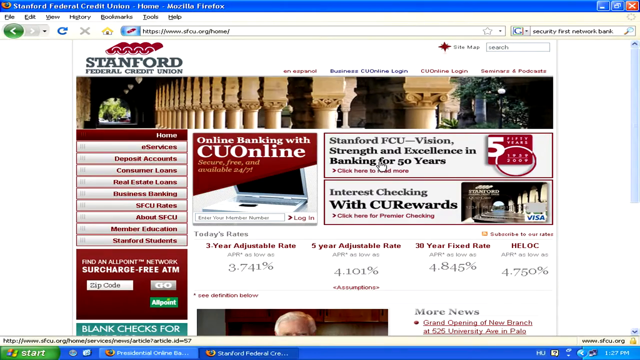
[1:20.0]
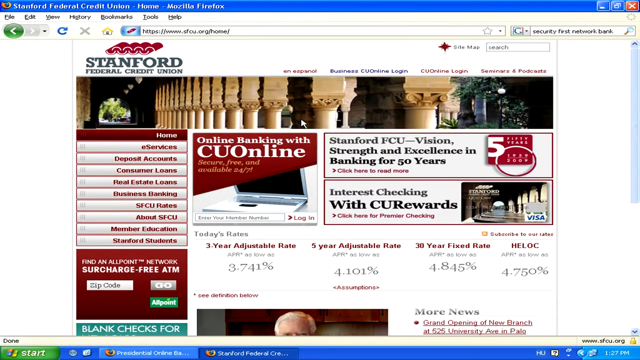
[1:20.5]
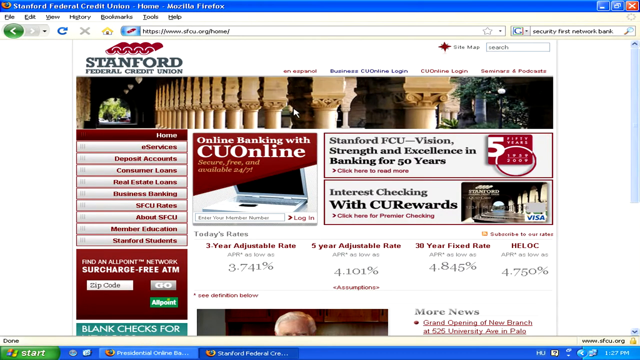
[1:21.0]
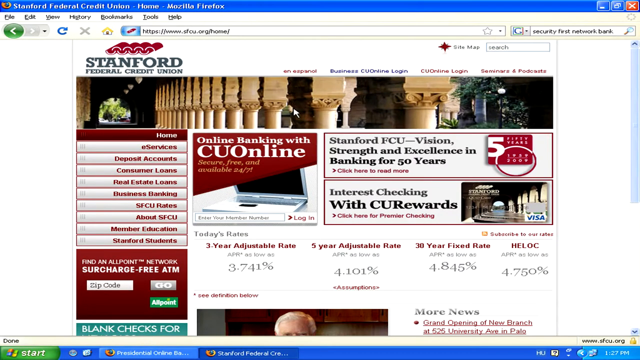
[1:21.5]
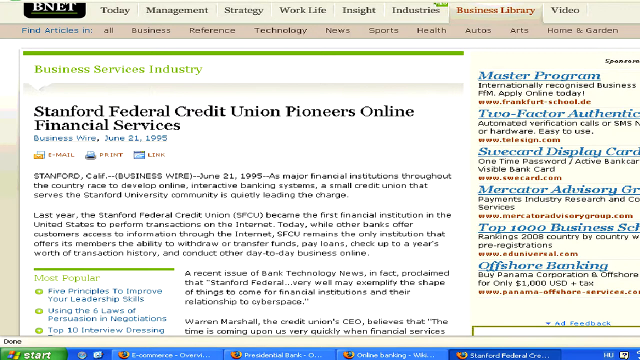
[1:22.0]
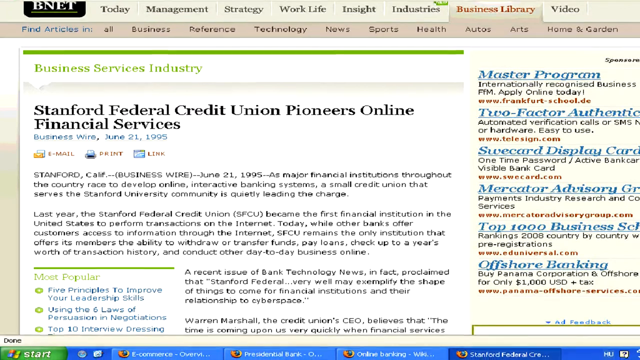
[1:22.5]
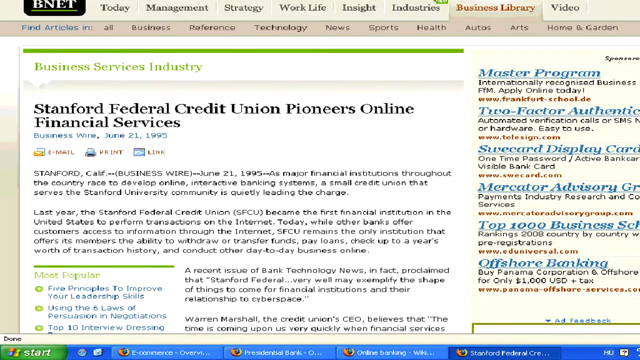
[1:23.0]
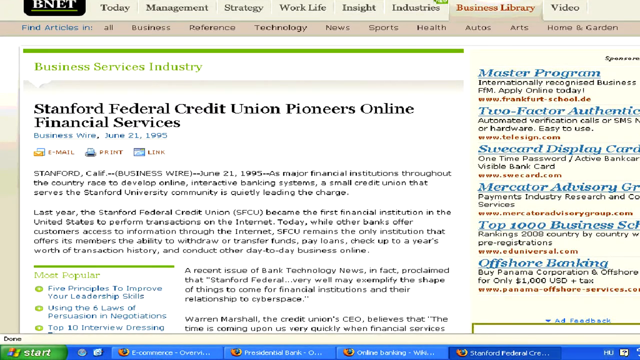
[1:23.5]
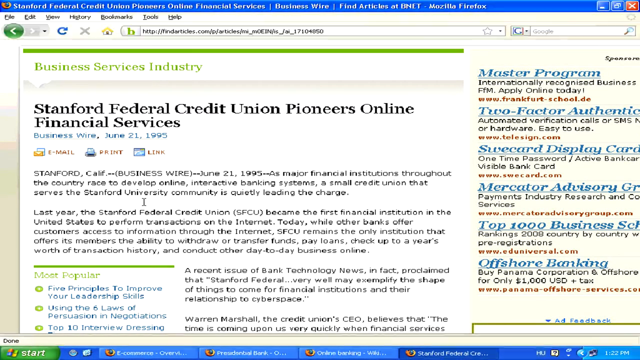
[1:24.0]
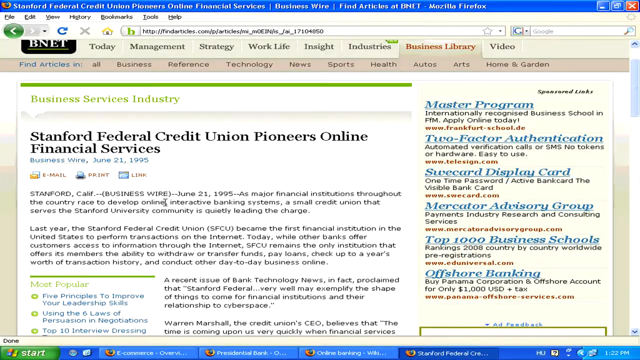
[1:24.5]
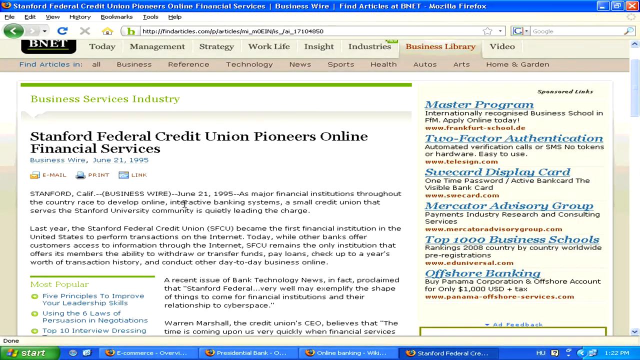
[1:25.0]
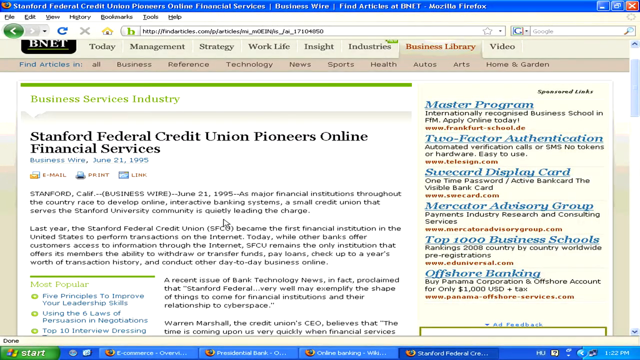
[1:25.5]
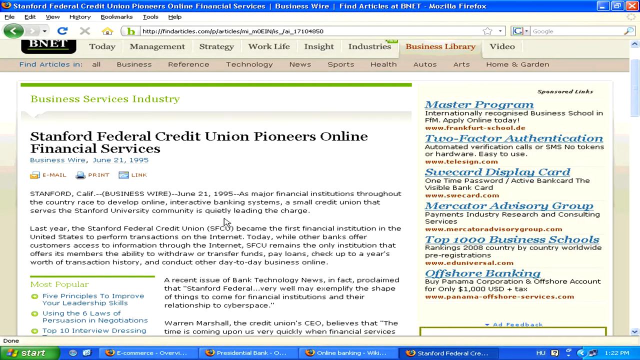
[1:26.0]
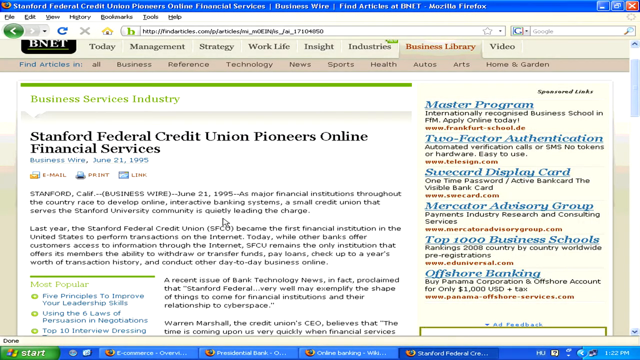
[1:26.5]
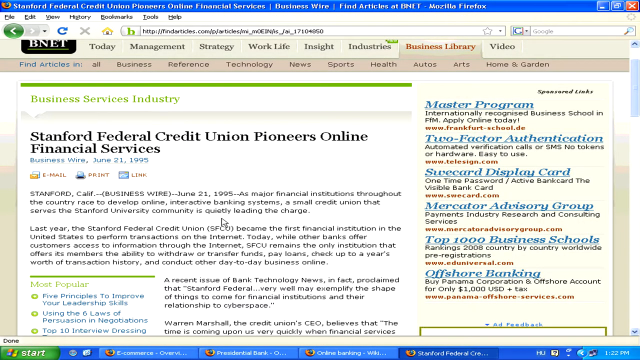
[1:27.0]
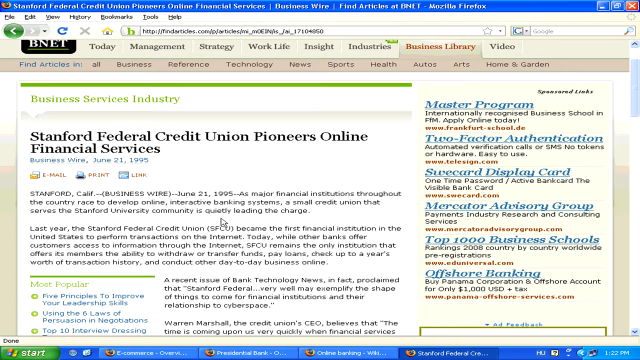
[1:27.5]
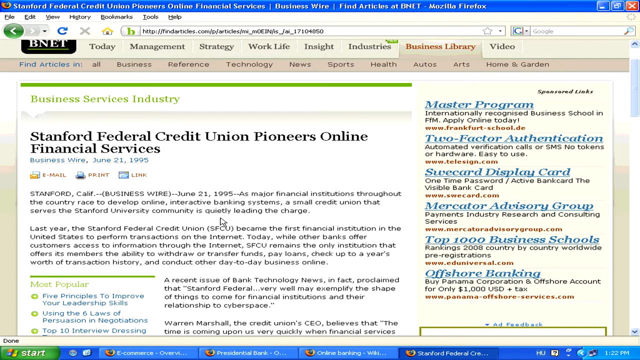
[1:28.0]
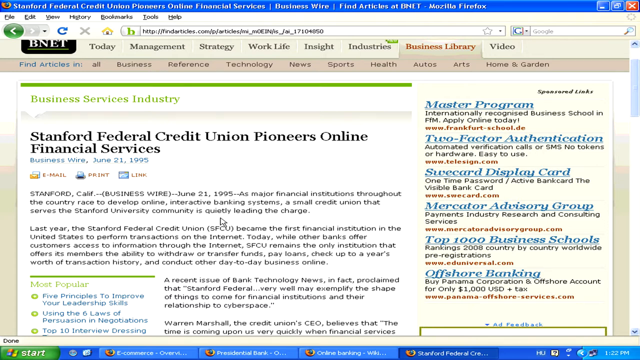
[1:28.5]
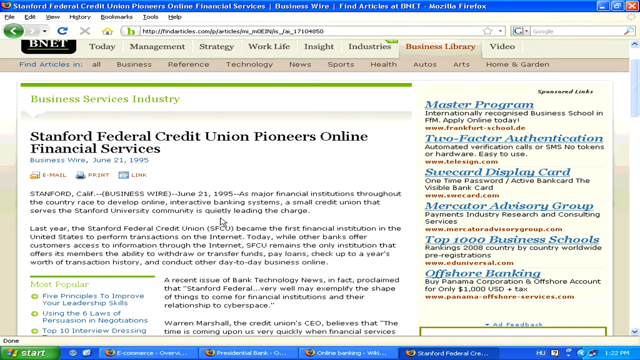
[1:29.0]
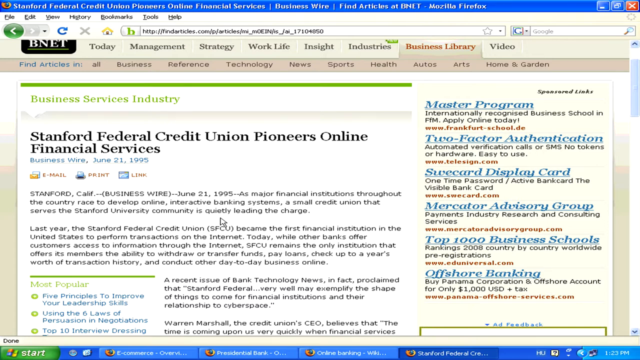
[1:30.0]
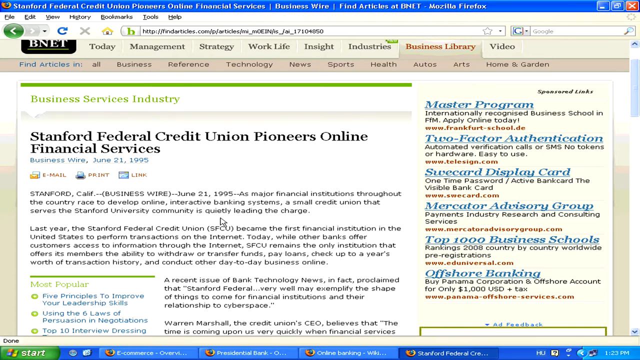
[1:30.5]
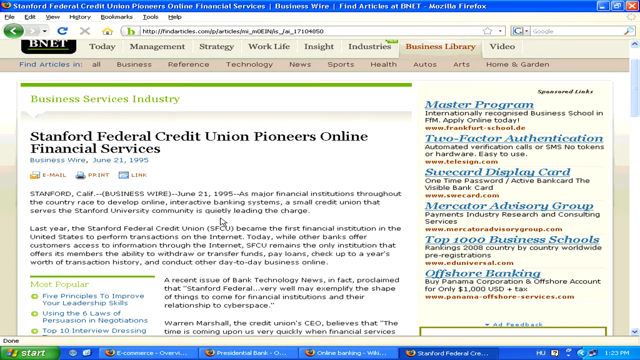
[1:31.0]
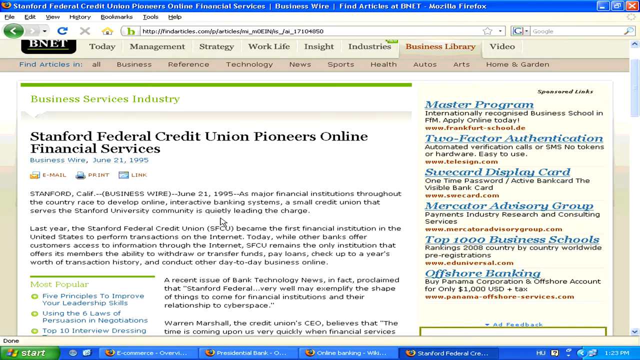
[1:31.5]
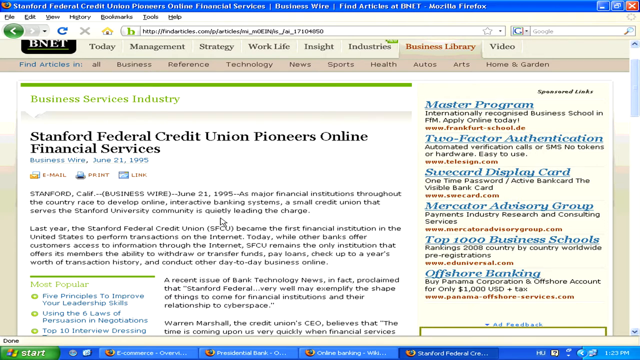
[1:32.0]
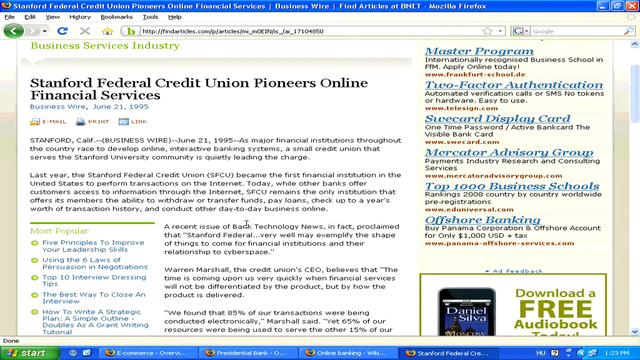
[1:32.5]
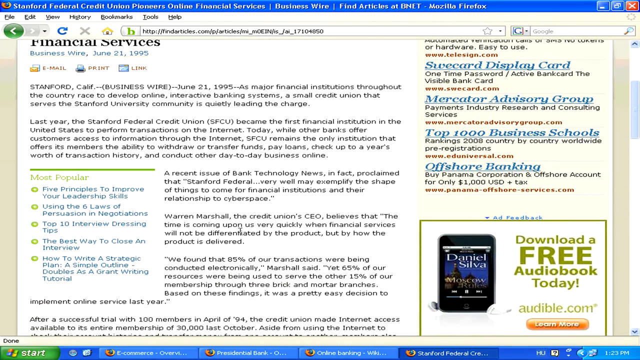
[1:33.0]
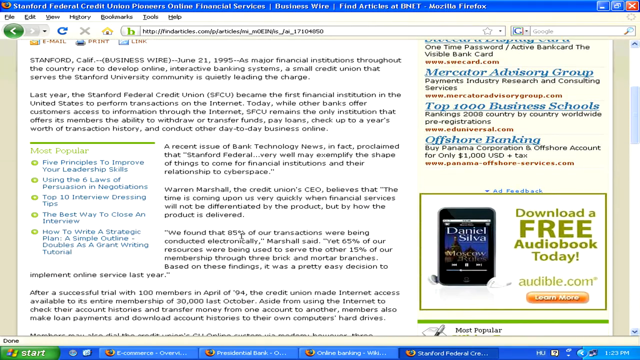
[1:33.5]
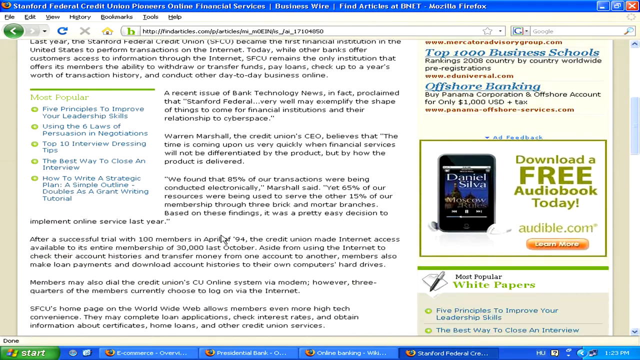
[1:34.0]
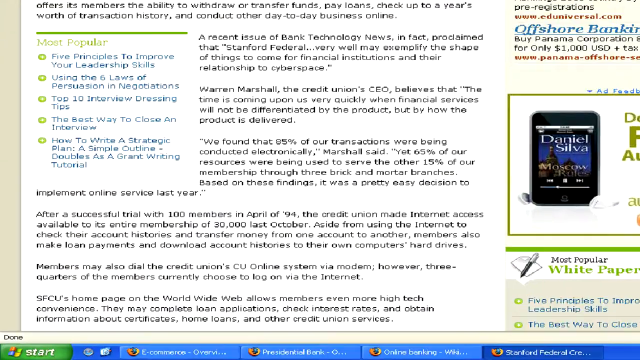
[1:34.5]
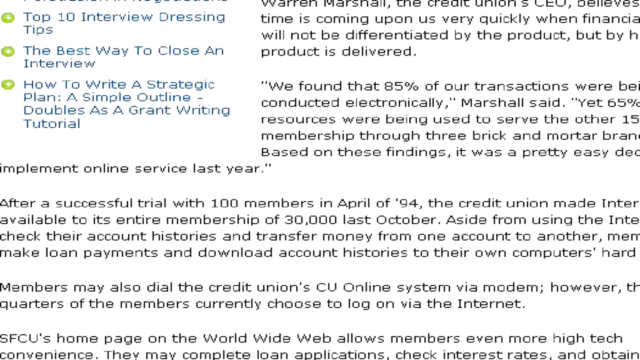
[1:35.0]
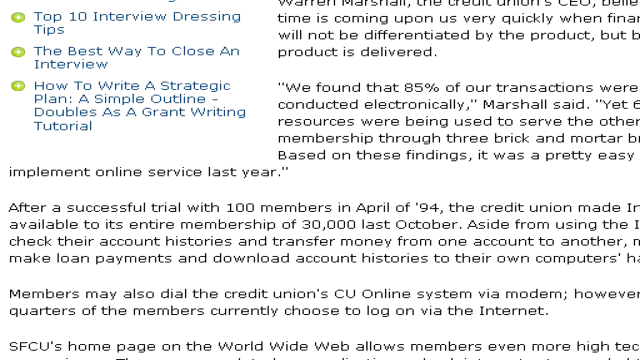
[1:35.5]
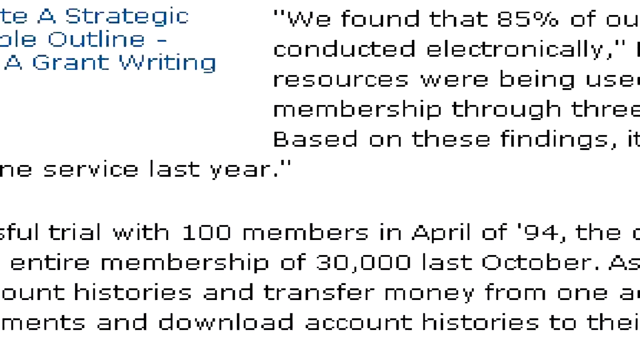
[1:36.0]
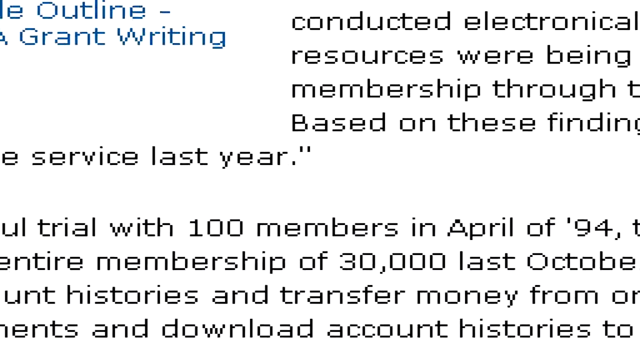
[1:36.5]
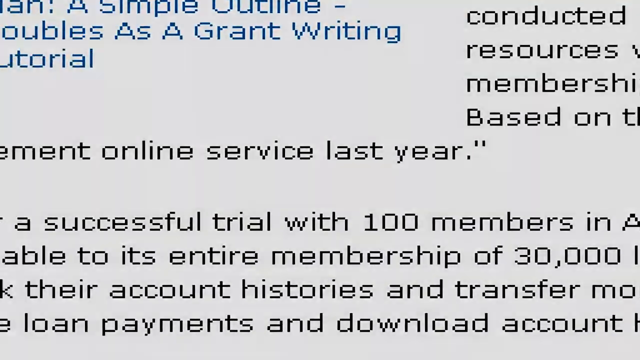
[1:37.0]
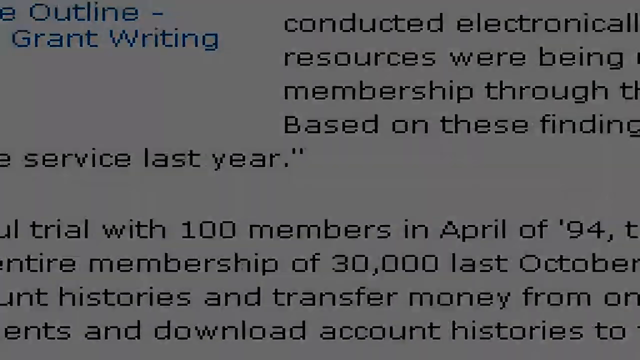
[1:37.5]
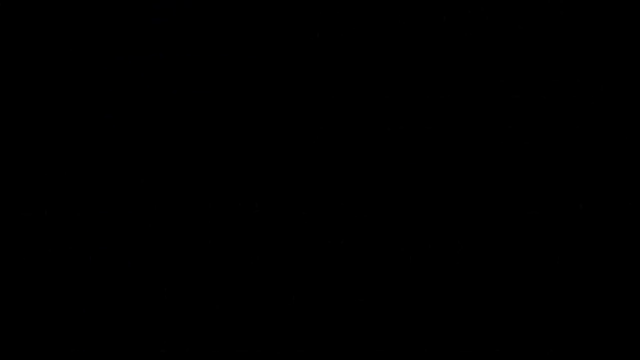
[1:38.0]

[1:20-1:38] The video goes back to the Stanford Federal Credit Union site and then to the article titled "Stanford Federal Credit Union Pioneers Online Financial Services." The date June 21st, 1995 is highlighted, with emphasis on Stanford University being in charge. The view then zooms into another part of the article that says "last year." The Stanford Federal Credit Union and Presidential Online Bank websites both look very basic and very similar.